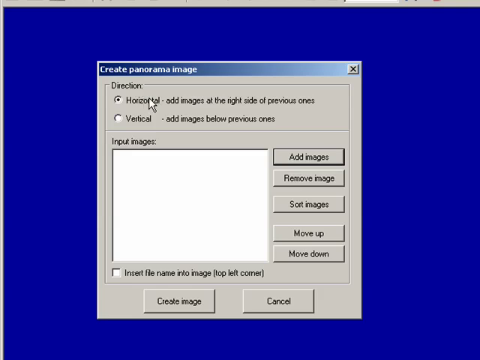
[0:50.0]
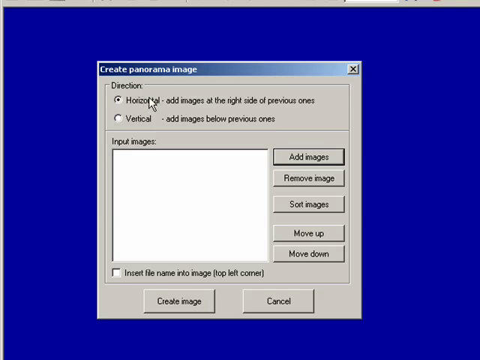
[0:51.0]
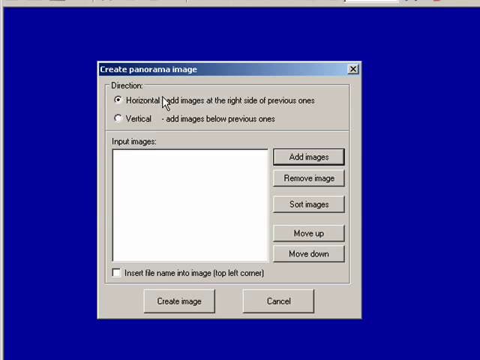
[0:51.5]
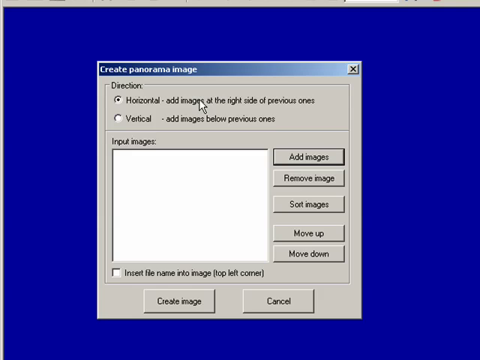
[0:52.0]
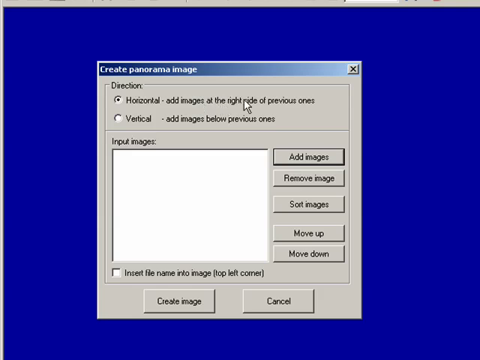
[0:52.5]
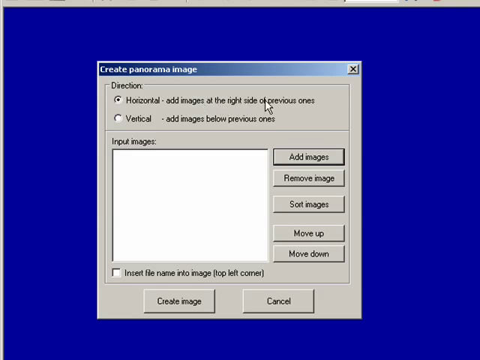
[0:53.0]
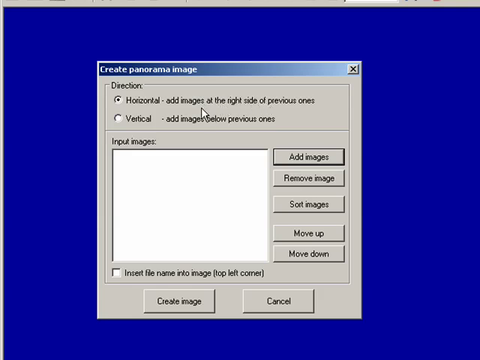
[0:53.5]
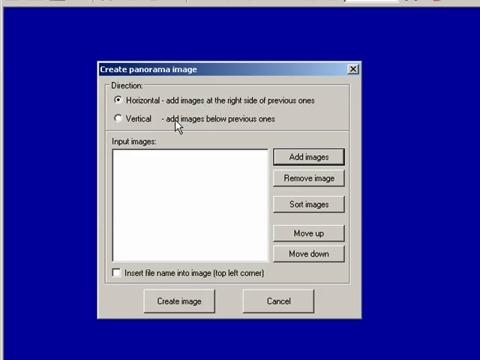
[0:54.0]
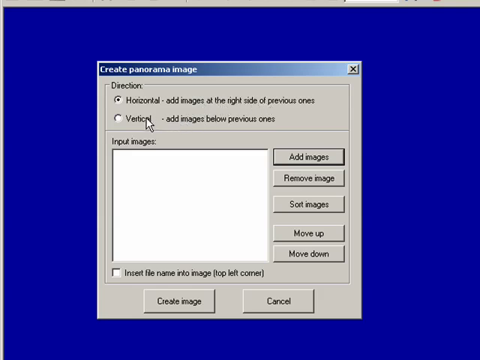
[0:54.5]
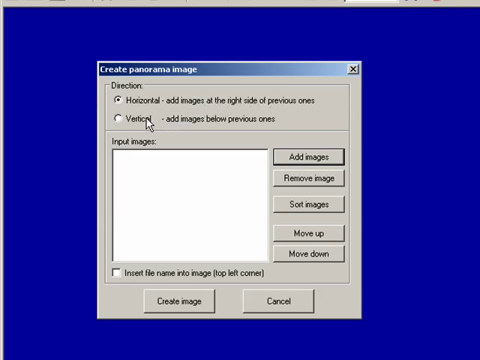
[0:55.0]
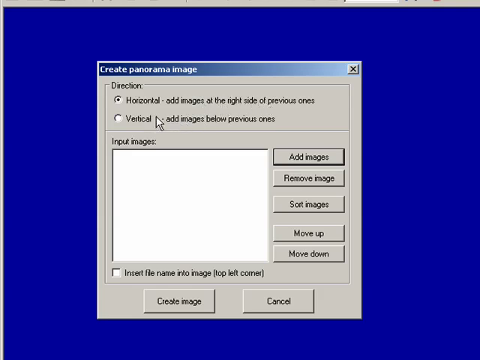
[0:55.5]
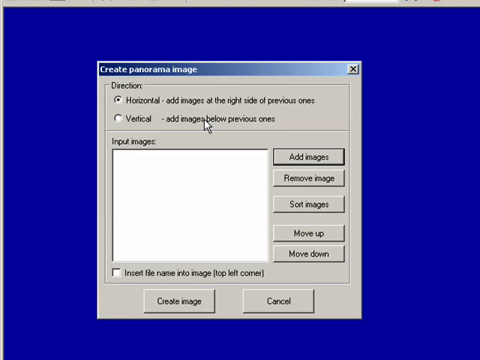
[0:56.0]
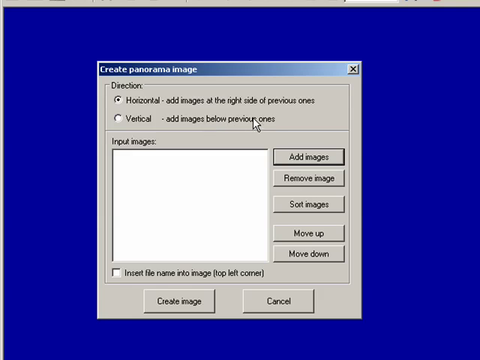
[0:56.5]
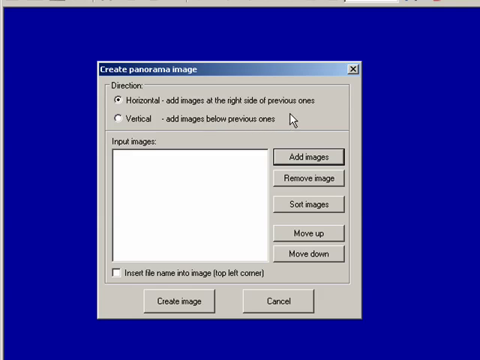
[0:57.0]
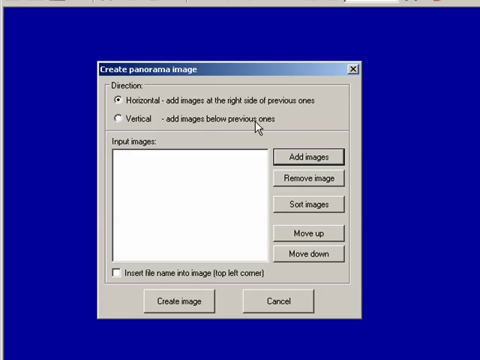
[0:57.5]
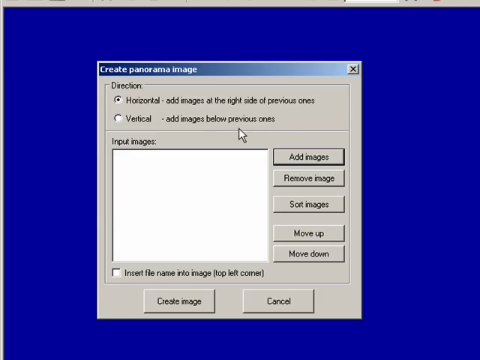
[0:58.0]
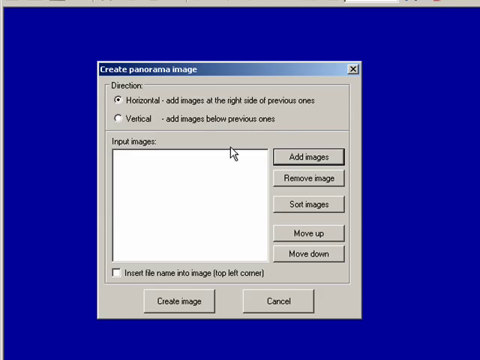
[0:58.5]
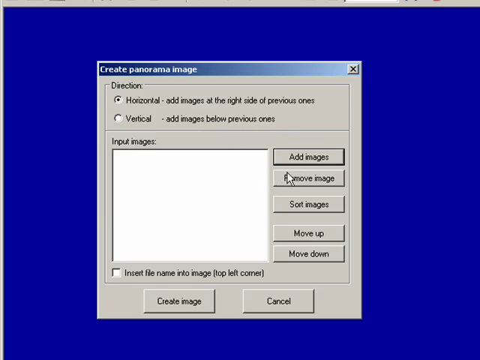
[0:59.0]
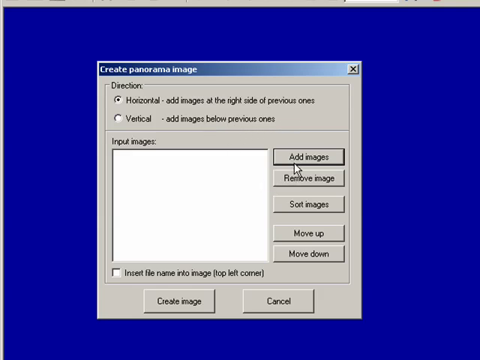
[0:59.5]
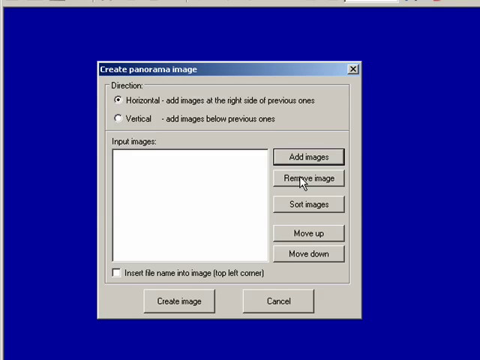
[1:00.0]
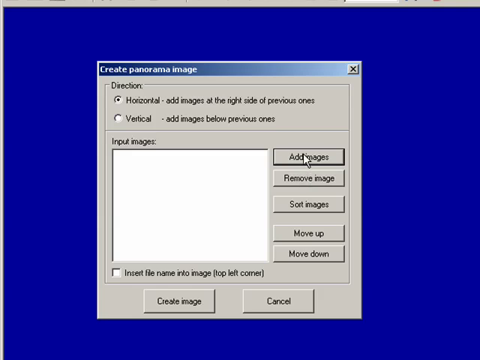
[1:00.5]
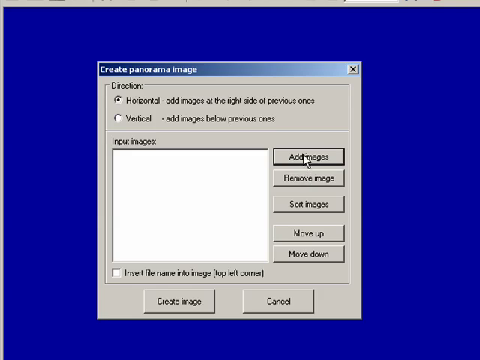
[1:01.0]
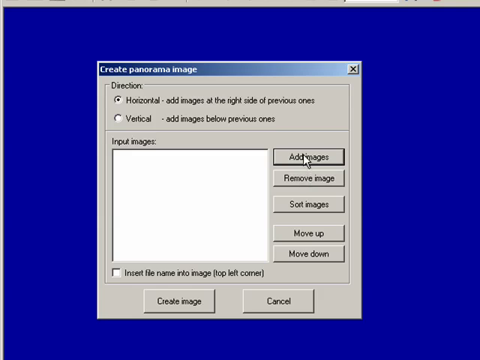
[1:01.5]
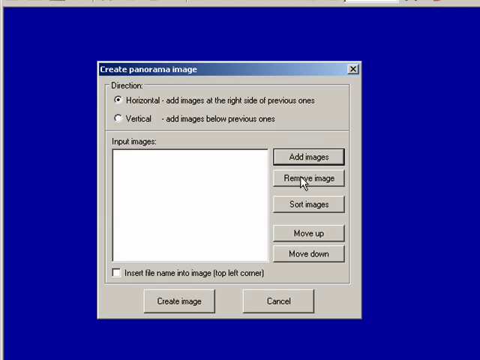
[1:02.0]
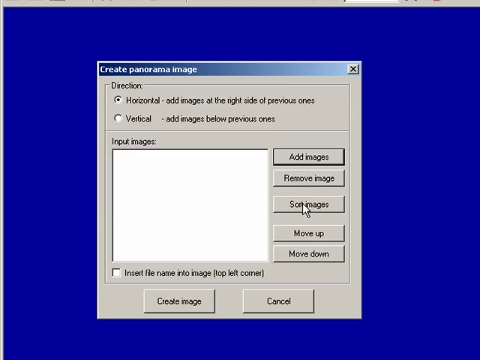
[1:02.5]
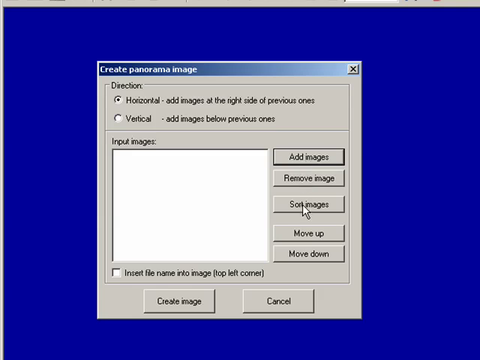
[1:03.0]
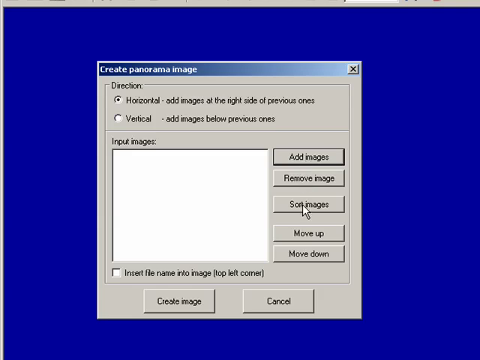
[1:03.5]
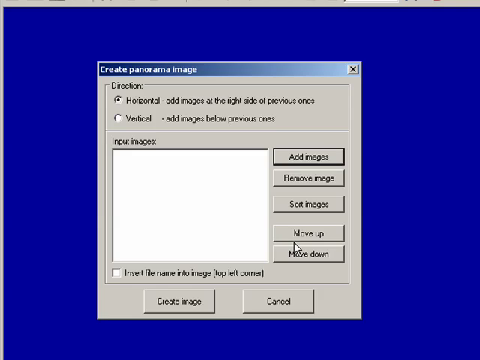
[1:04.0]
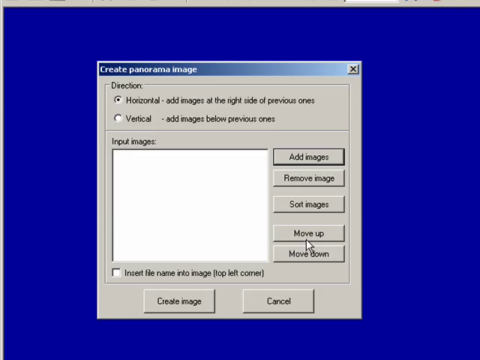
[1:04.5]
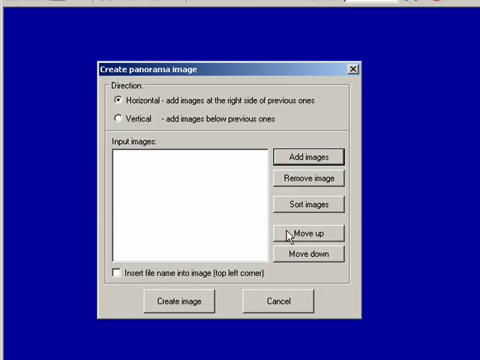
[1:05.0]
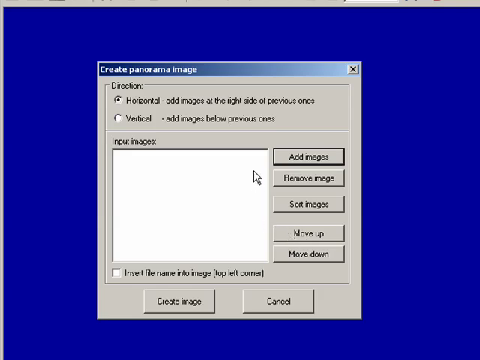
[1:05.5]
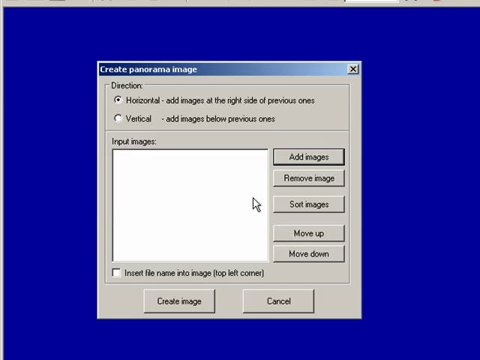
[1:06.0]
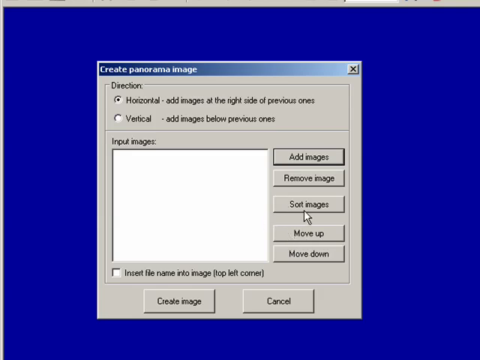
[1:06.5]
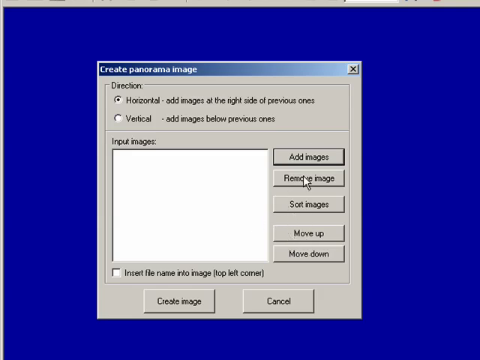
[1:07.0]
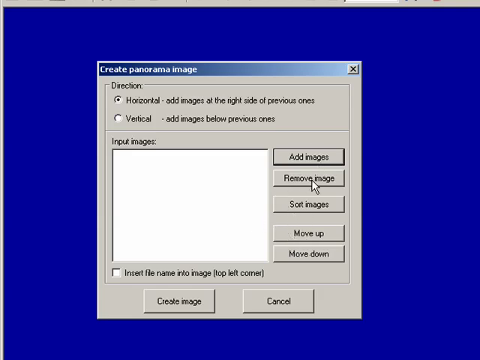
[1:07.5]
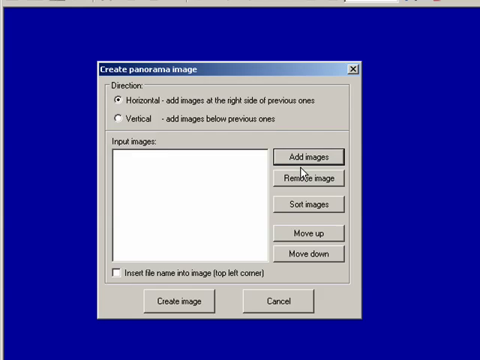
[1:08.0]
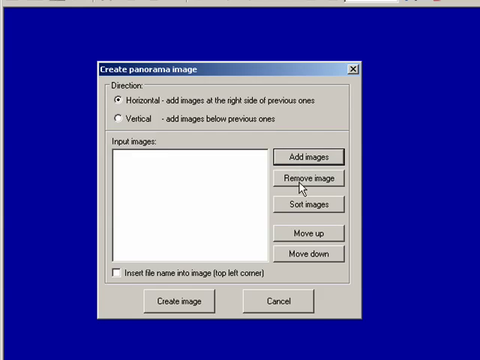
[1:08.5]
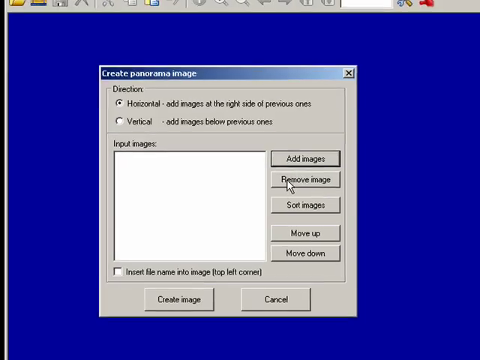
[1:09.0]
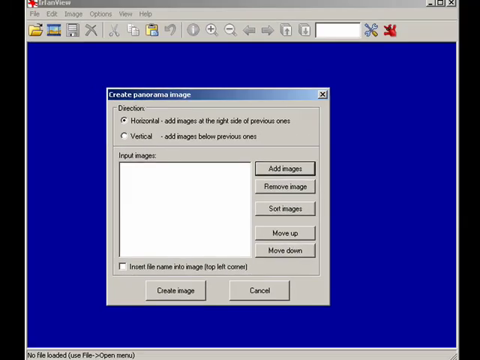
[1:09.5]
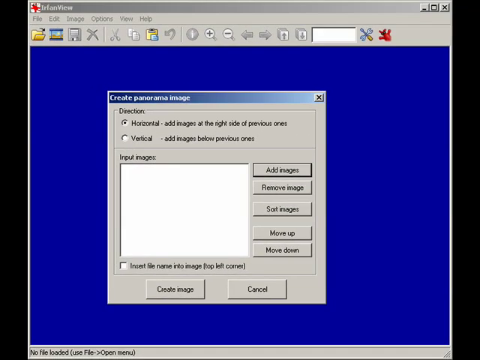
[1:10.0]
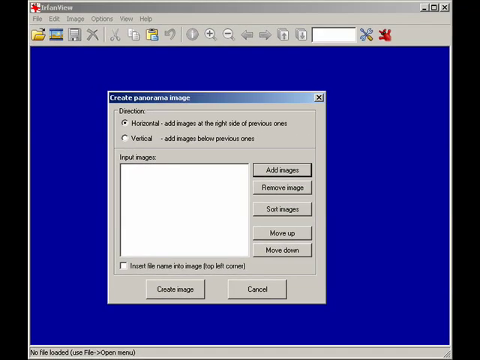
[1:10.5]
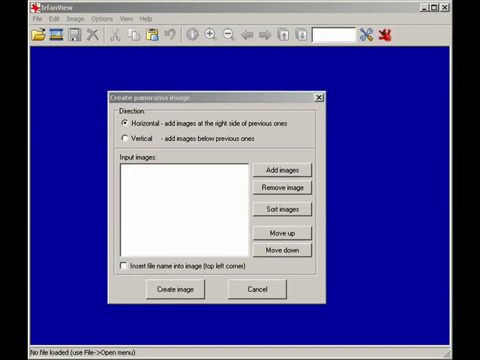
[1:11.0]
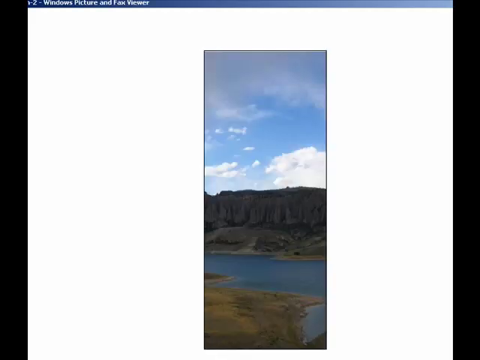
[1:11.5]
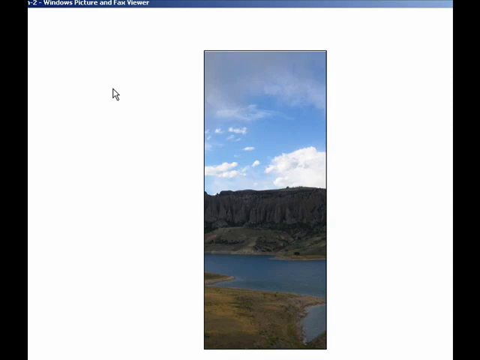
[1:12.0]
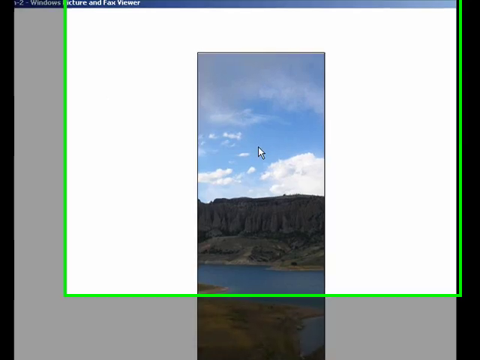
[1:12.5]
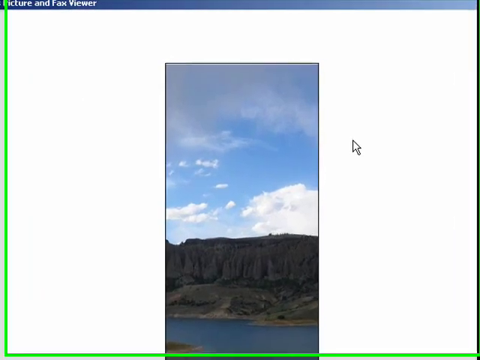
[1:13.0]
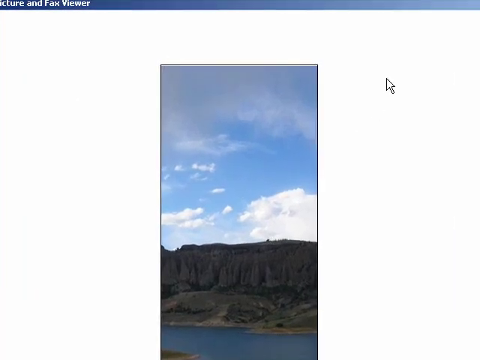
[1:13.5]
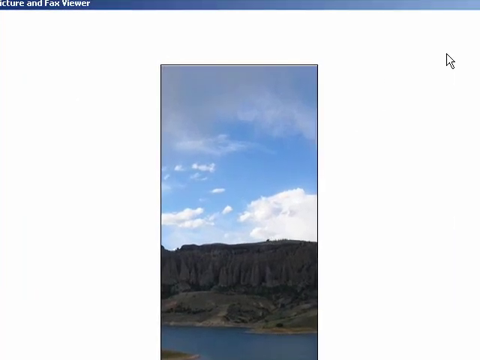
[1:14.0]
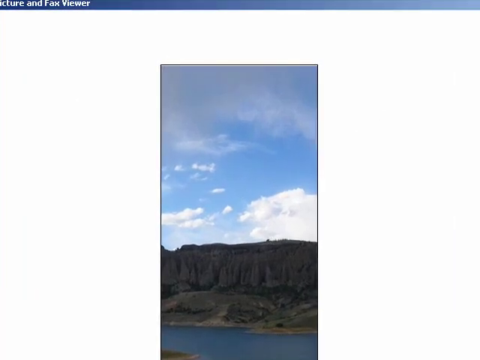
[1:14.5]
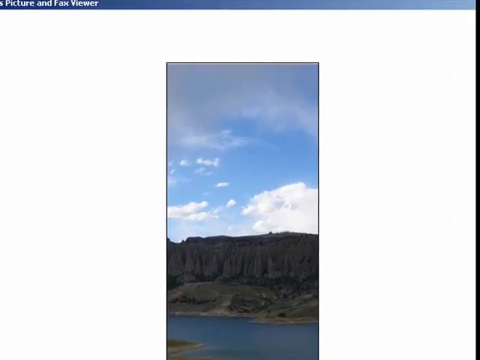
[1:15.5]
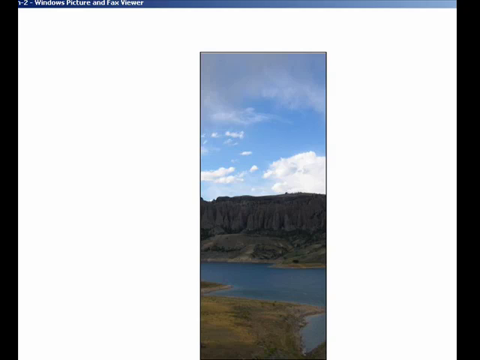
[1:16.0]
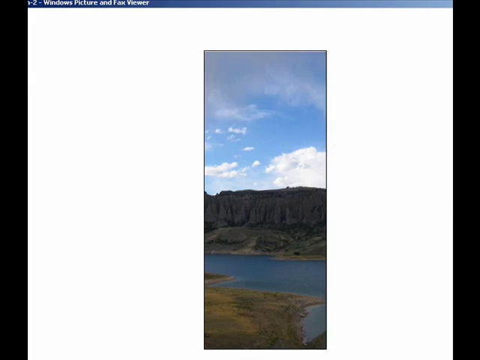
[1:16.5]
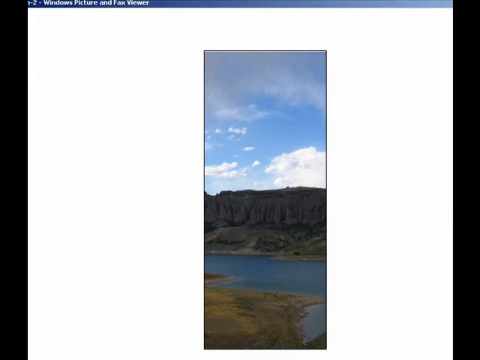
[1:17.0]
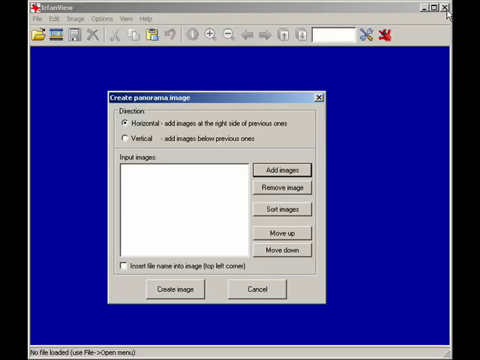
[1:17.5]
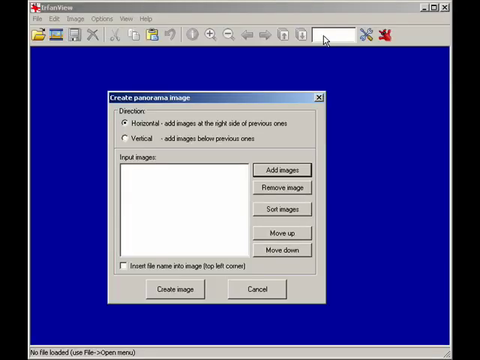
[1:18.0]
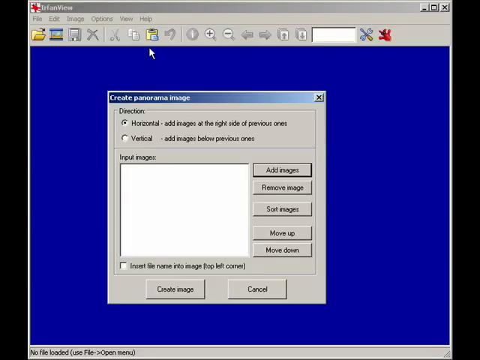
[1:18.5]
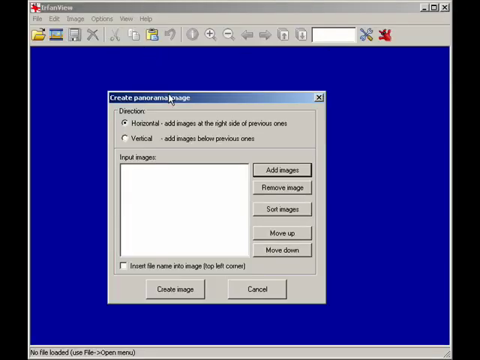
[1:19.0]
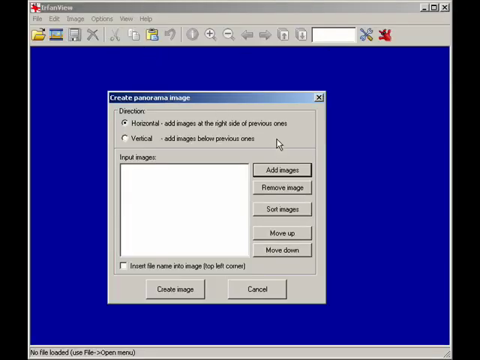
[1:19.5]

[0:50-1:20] Below the options there is an "input image" area, an empty white box, with a few options to its right. At the very top right of the white box is "add images", which has a black shadow, a slightly darker border. Below it is a "remove image" button, then some space, a "sort image" button, more space, and then "move up" and "move down" with less space between them. The cursor jerks a little from left to right over the horizontal direction option, seemingly reading it, and does the same with the vertical option. It then goes back down over the five buttons, holding the cursor over each one, moves over to the white box and jostles up and down, and returns to the add and remove buttons. The view zooms out, becoming somewhat distorted and jagged as it does. Suddenly a picture of a nature scene appears: it looks like a bluff with a waterway in front of it under semi-blue skies, shown in what looks like a program for pictures, possibly for editing. The view zooms in again, and the cursor goes to the right and disappears.